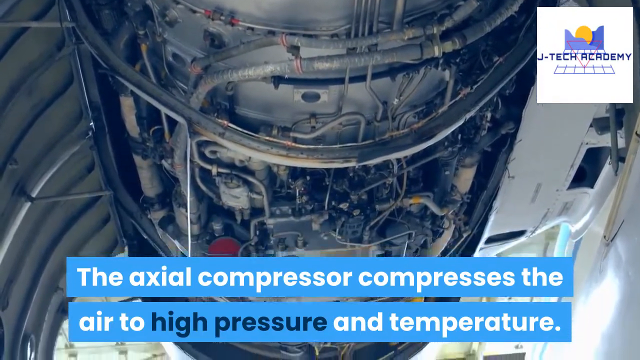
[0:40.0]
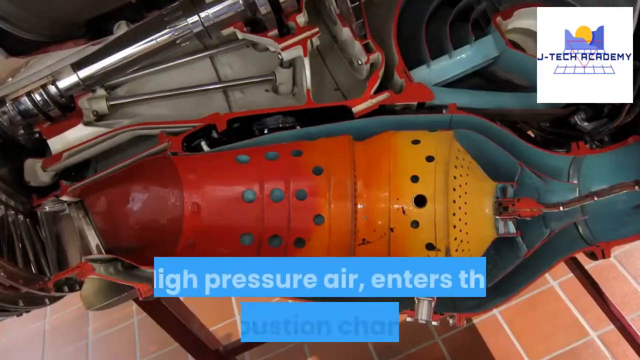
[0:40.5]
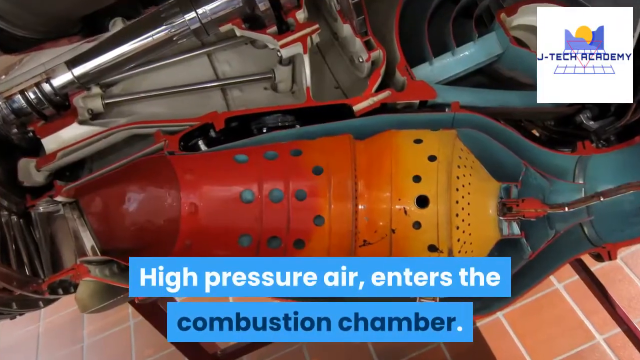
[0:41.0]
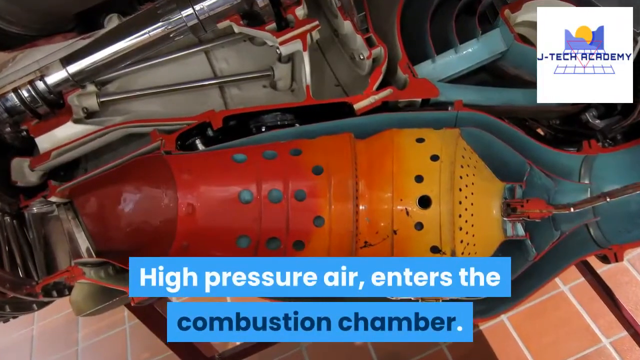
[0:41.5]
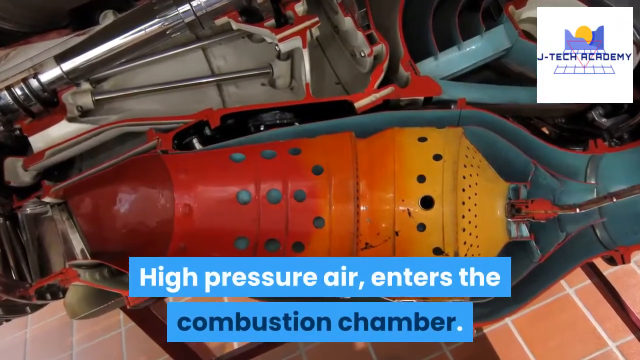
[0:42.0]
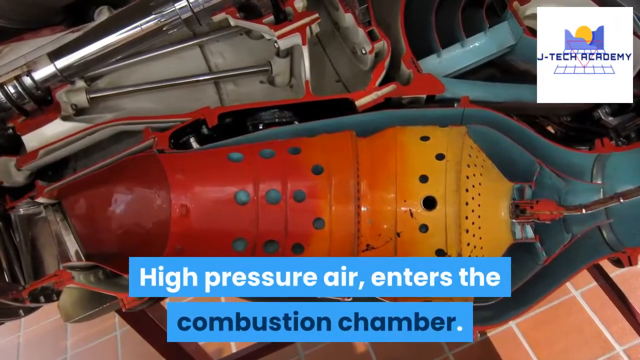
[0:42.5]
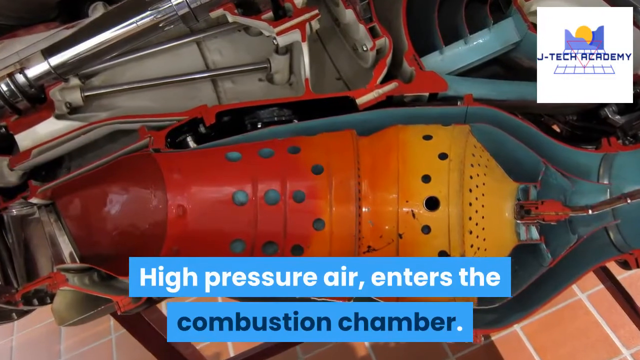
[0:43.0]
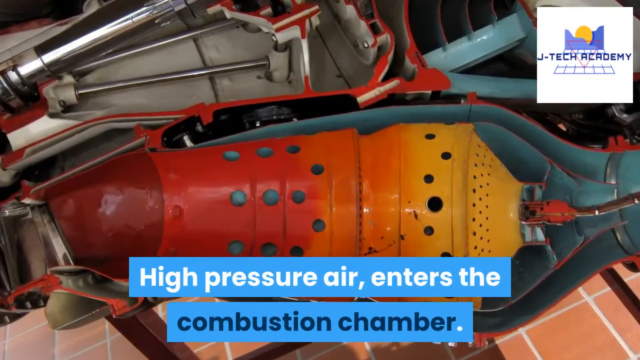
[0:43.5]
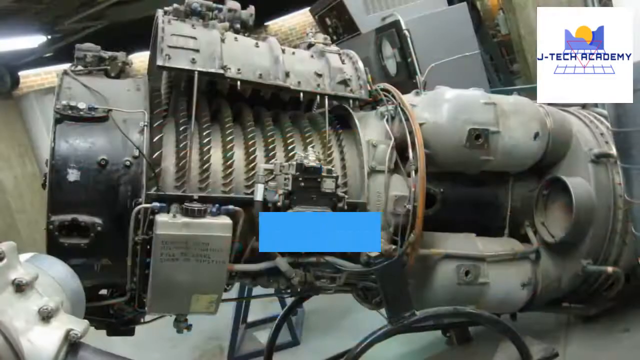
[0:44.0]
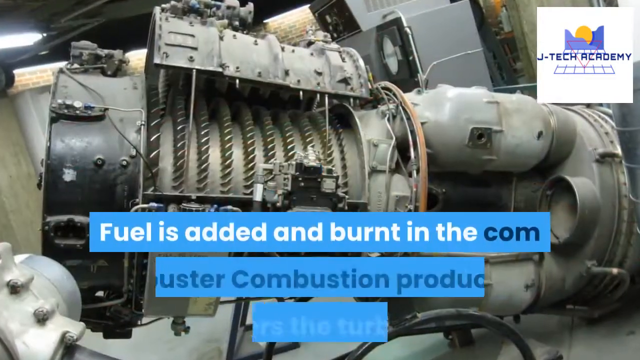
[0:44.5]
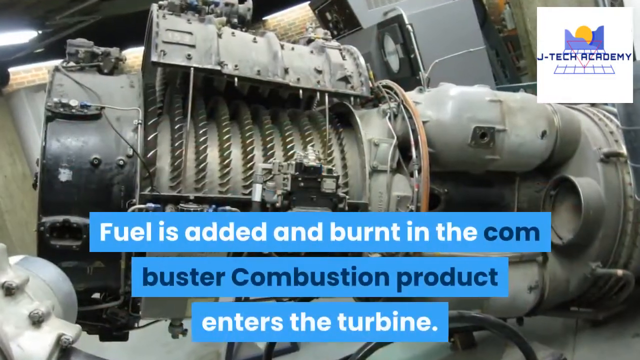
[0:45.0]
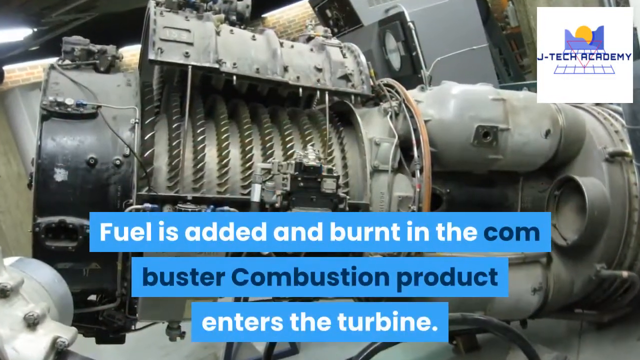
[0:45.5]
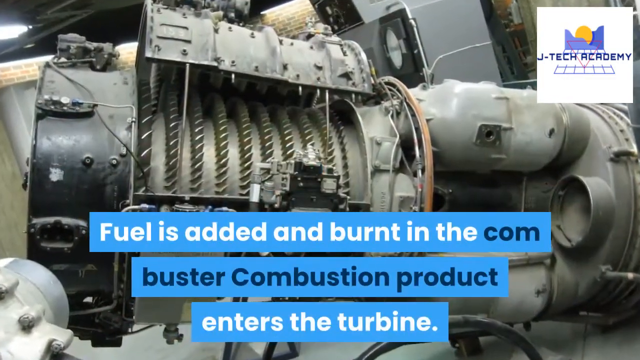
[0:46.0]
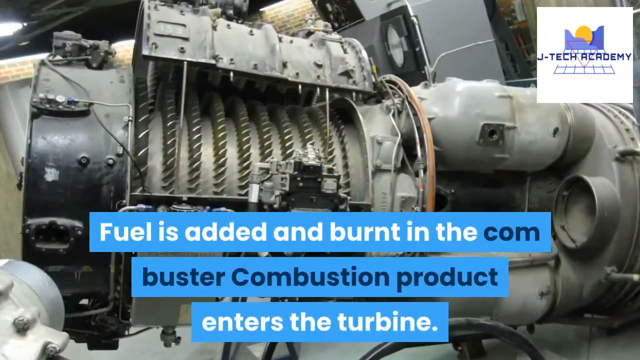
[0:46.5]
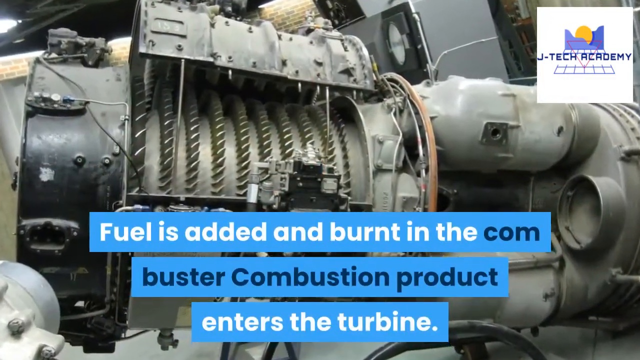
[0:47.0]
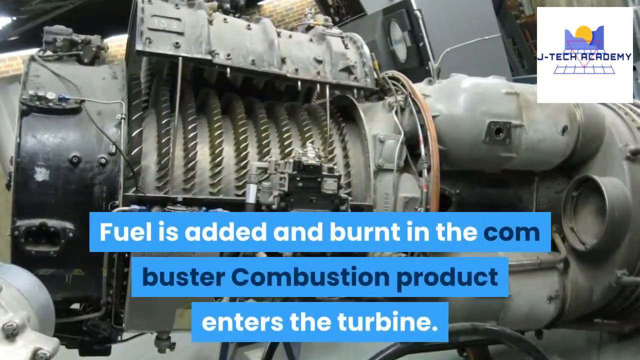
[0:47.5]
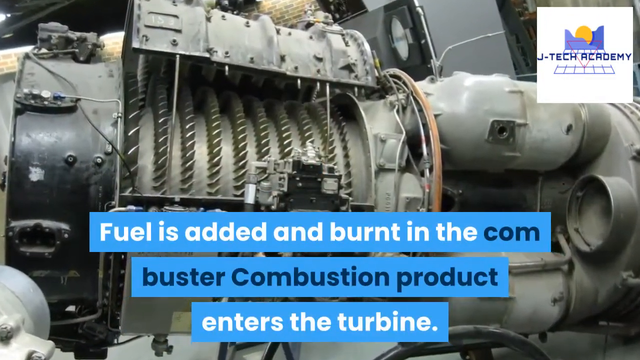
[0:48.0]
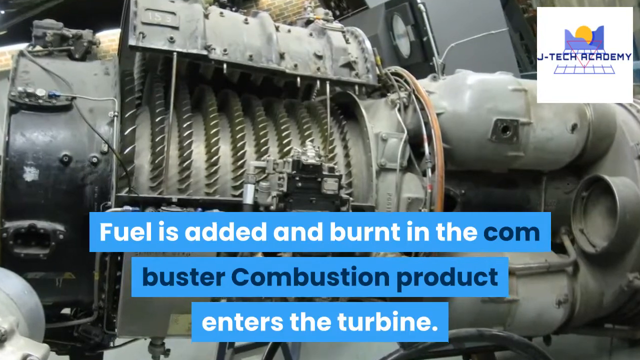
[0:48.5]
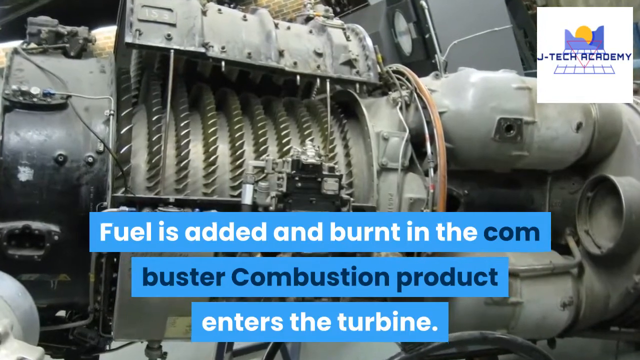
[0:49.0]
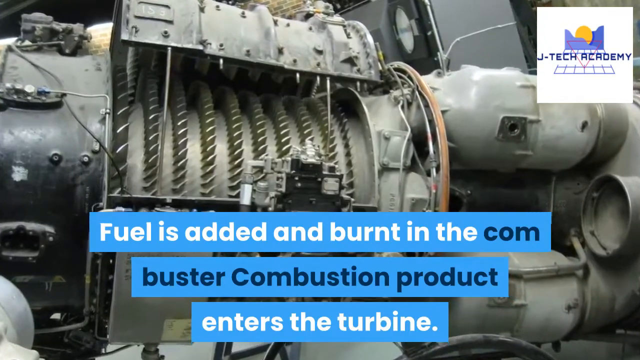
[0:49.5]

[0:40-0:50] A cutaway section of a jet engine is shown, with text at the bottom of the screen reading "the axial compressor compresses the air to high pressure and temperature." A different view of the inside of an engine follows, this time in red, orange and yellow, with text at the bottom reading "high pressure air enters the combustion chamber." Another picture of an engine, all grey, appears with text reading "fuel is added and burnt in the combustion product enters the turbine." The sequence moves through different cutaway sections of engines, with text guiding what happens within them.